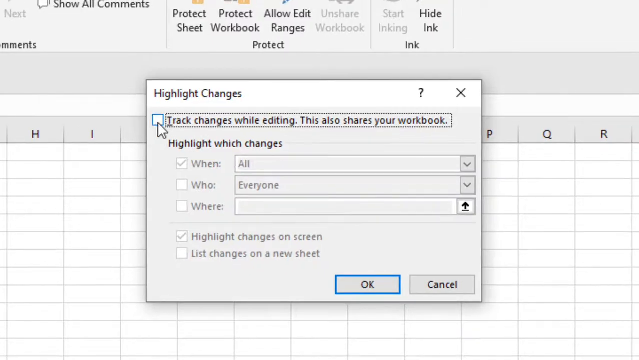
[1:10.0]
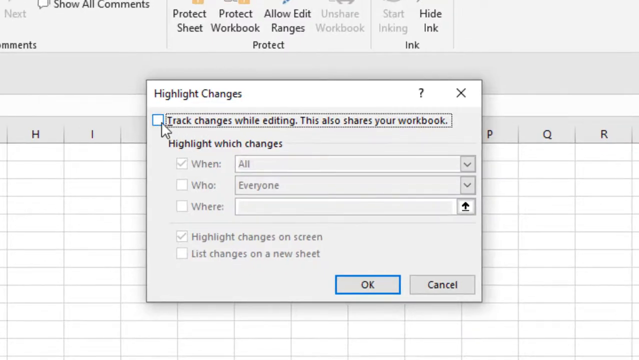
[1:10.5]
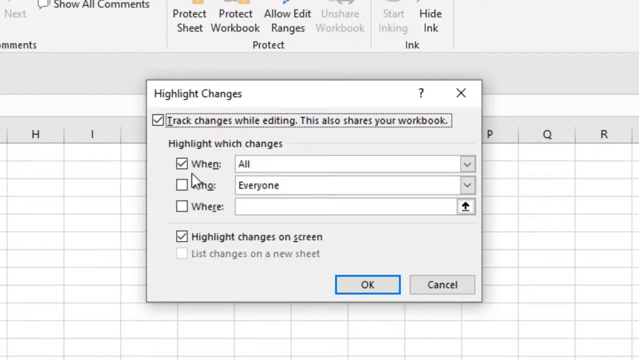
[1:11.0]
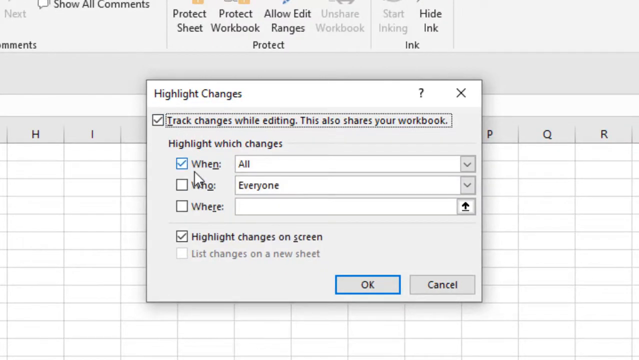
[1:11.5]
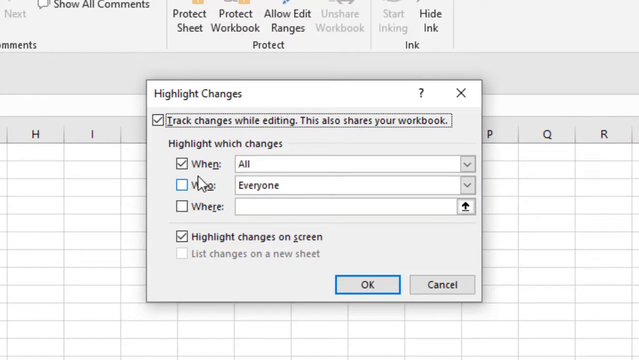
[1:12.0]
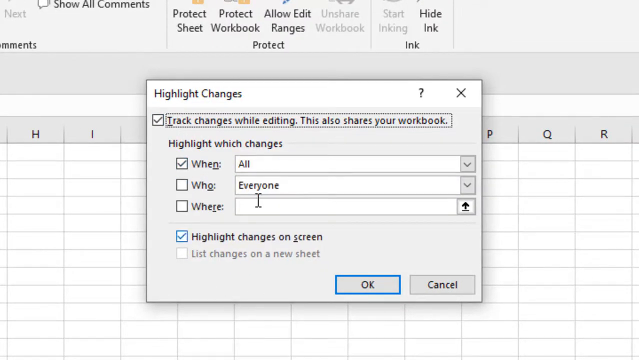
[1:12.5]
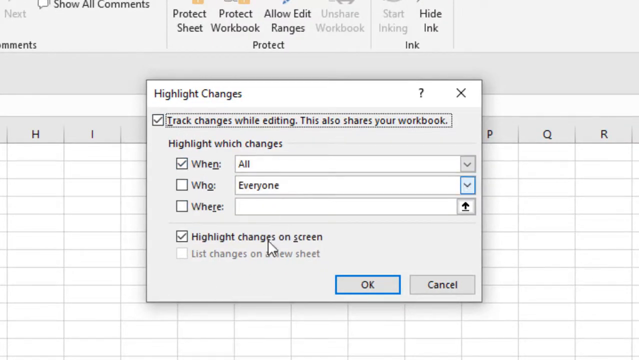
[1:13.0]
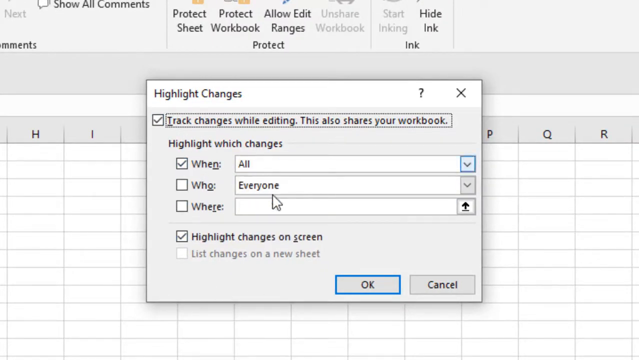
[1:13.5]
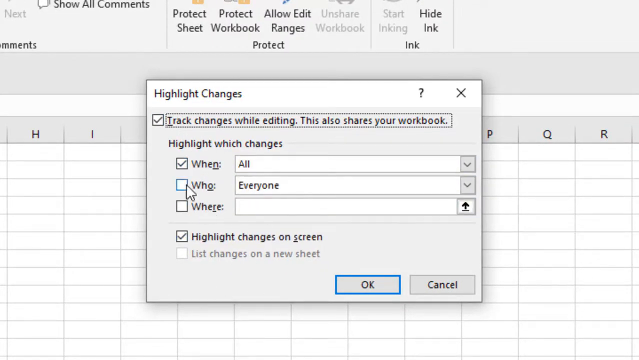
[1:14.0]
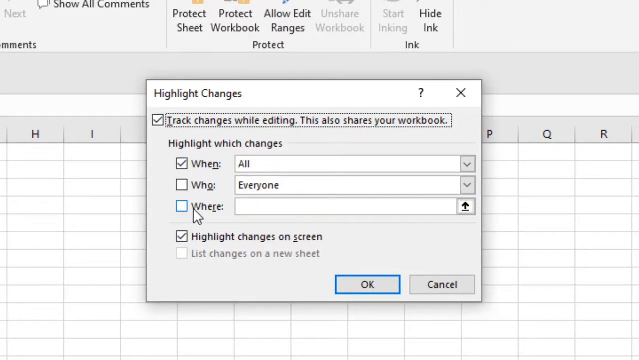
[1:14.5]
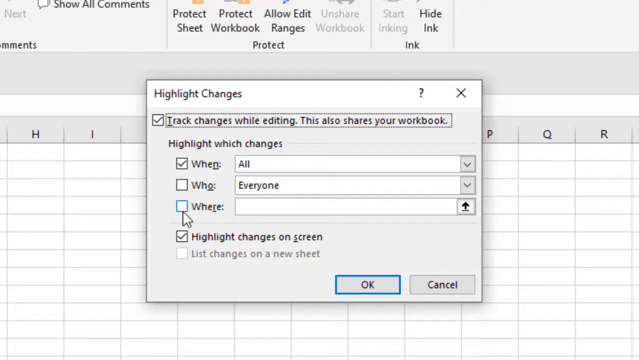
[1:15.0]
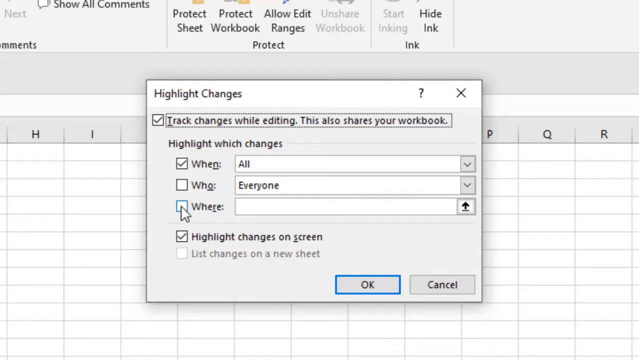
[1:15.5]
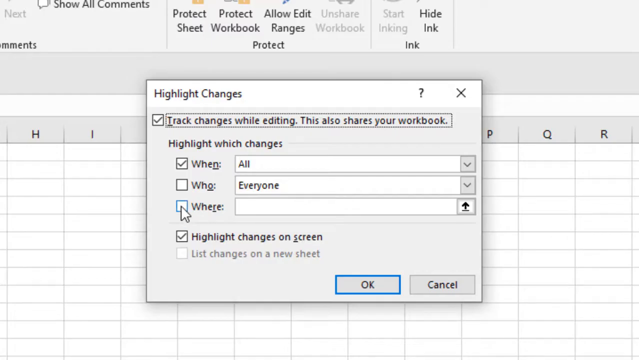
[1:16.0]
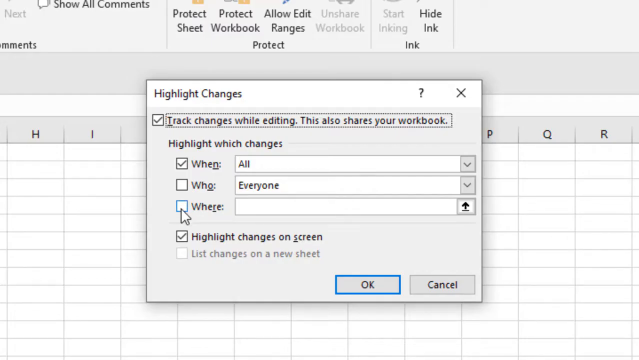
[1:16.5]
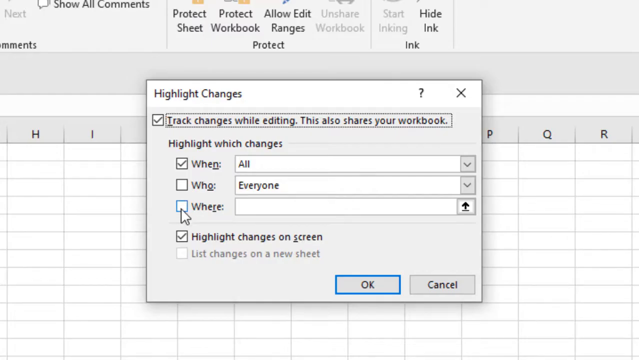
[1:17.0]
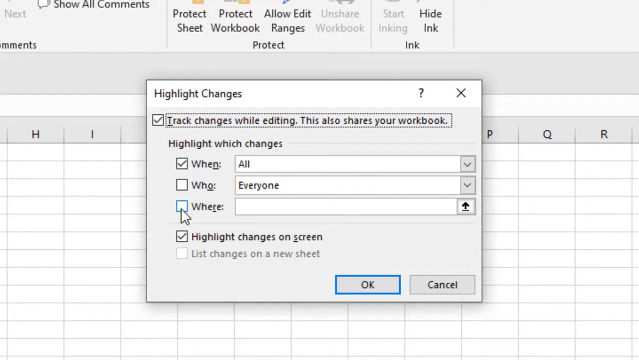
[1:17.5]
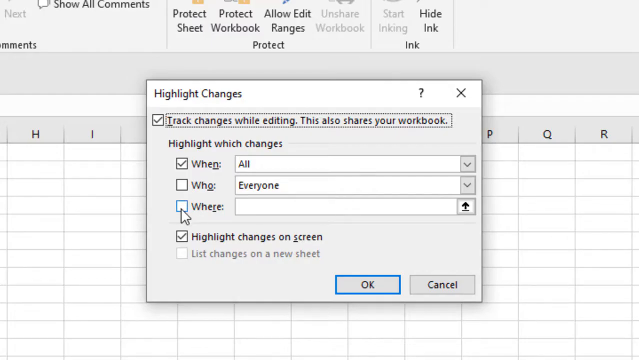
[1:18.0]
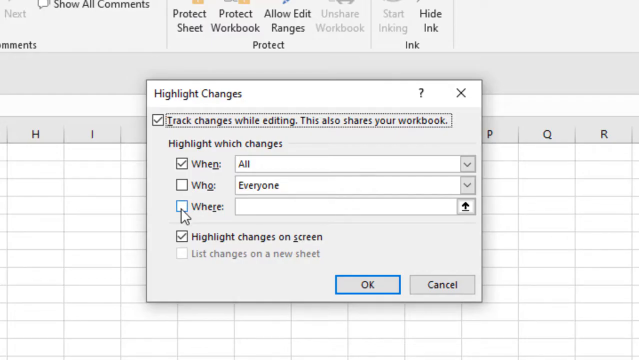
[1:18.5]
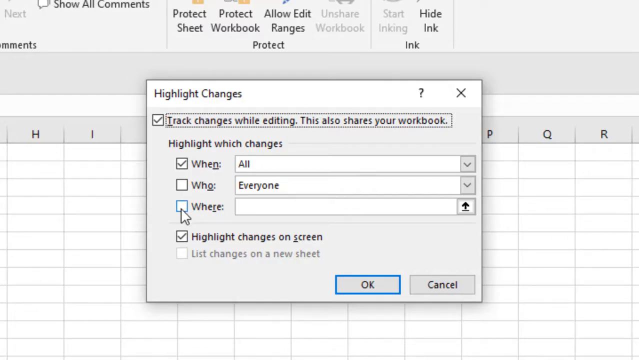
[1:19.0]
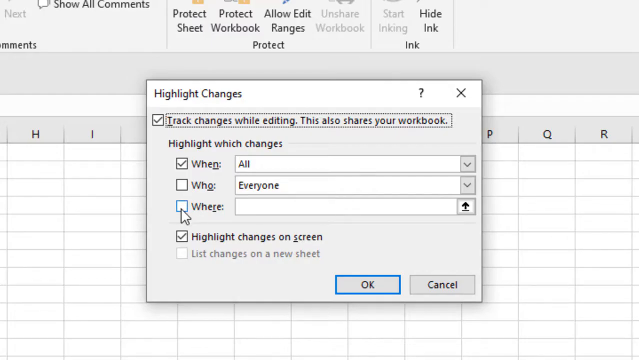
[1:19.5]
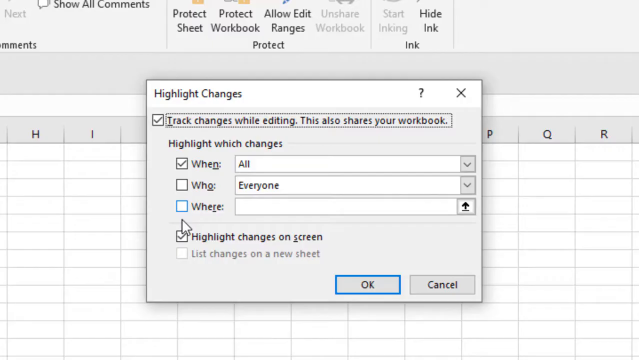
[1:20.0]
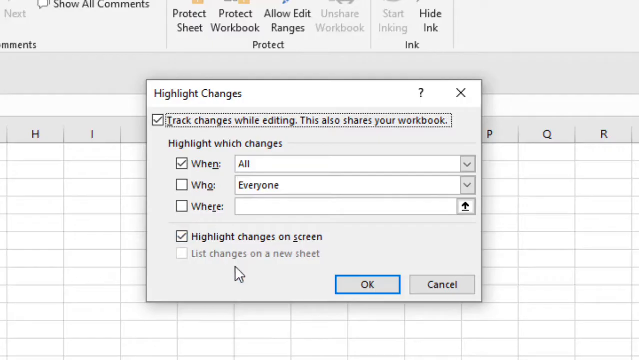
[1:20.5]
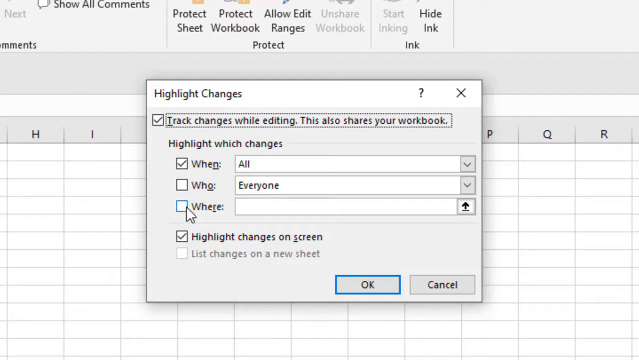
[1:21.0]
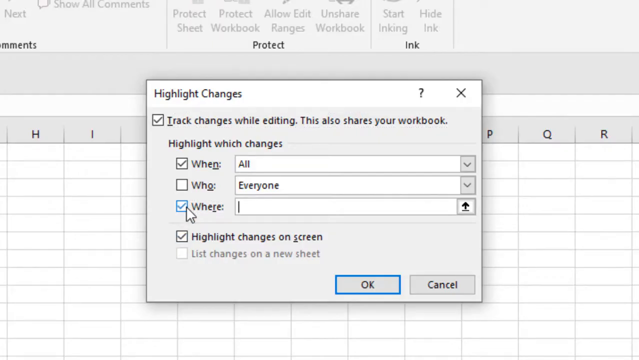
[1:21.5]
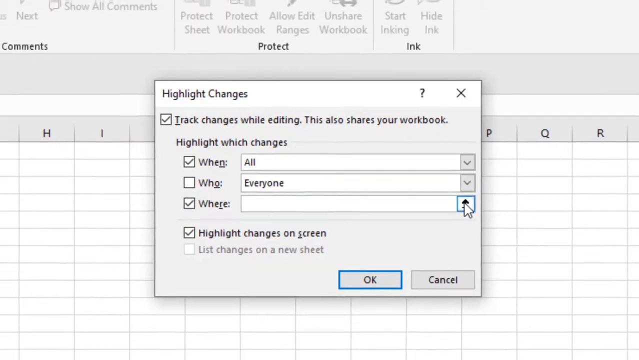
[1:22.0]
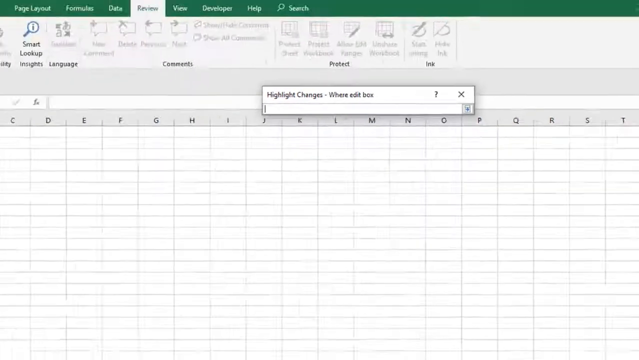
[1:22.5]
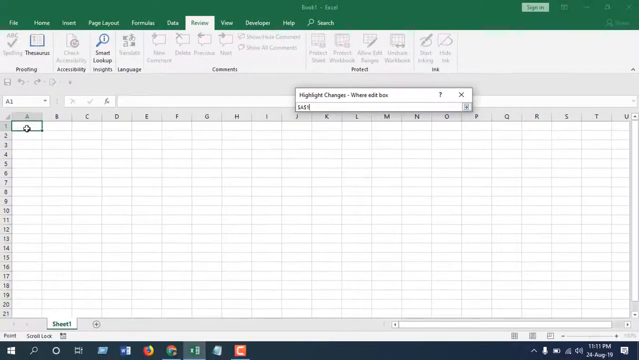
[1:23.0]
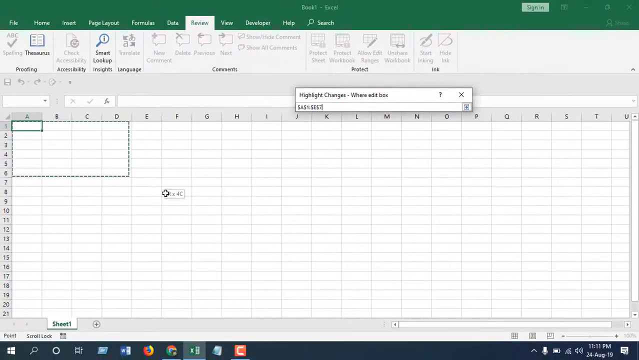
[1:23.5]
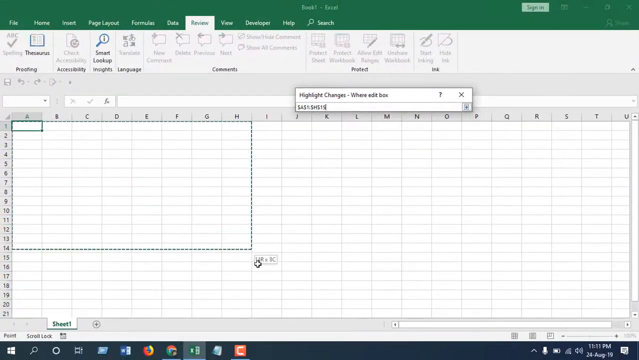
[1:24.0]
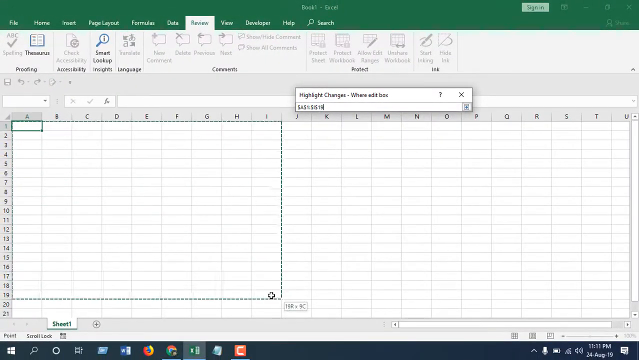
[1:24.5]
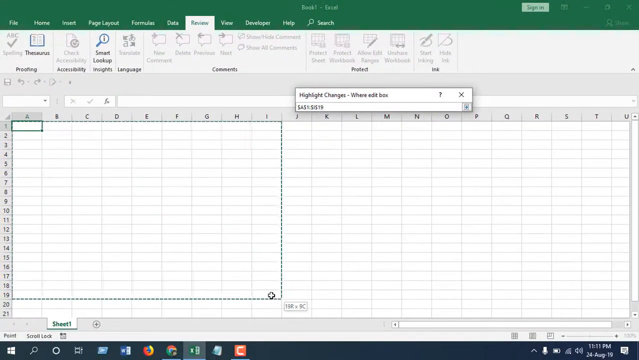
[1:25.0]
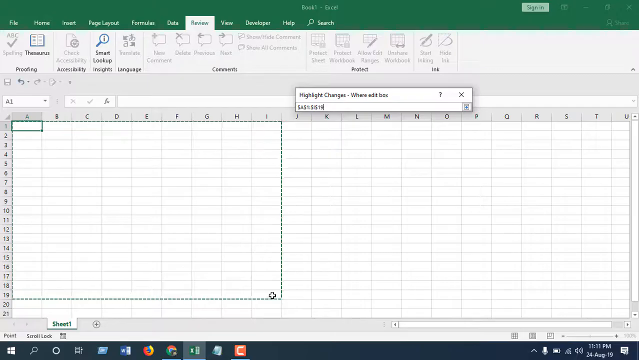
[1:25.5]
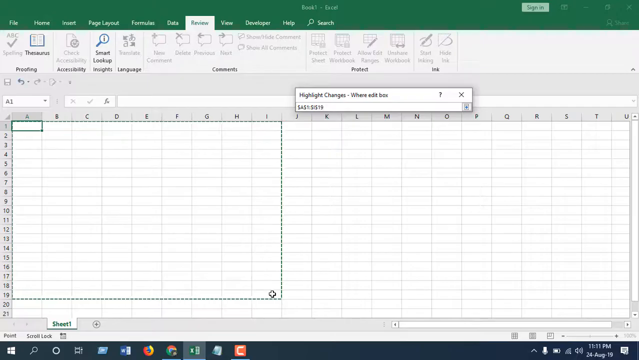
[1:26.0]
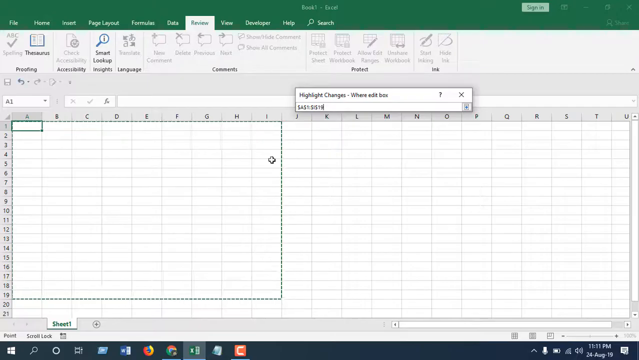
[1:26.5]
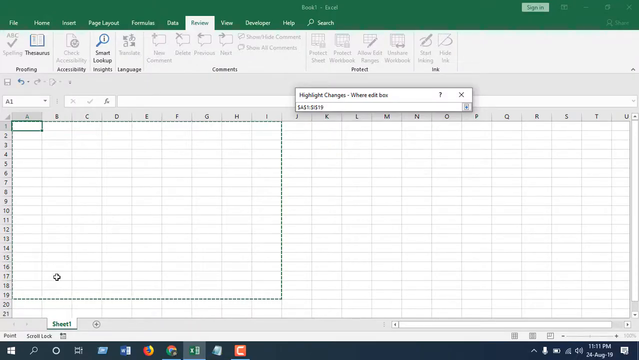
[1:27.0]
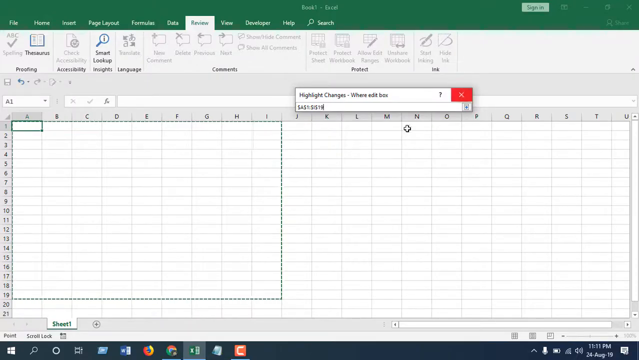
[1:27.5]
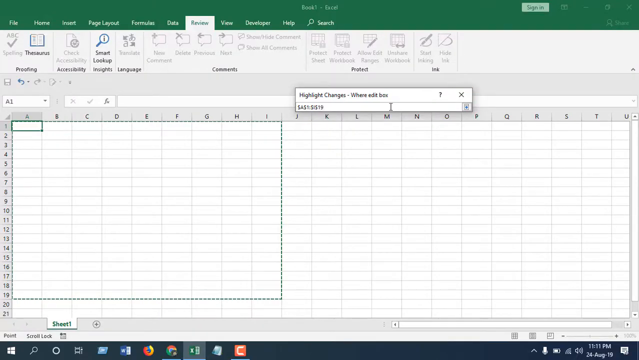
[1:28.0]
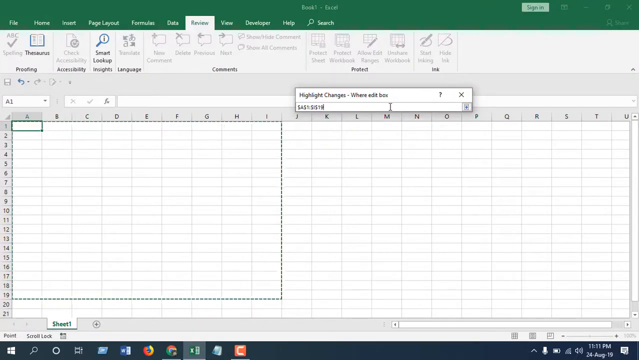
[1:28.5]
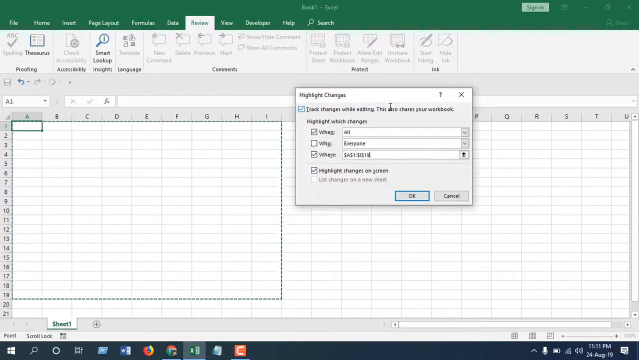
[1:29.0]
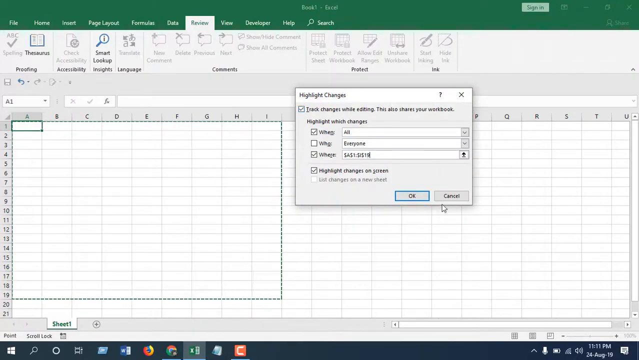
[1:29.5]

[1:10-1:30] A box titled "Highlight Changes" is open in Microsoft Excel. Its text reads "Track changes while editing. This also shares your workbook", "Highlight which changes" with When, Who and Where, and "Highlight changes on screen" and "List changes on a new sheet", with some of this dimmed out because those settings are not enabled. The user toggles the track changes while editing option, which makes the Highlight which changes settings adjustable. The mouse moves over that section and hovers over the Where box, and the user selects it. The user then clicks another box, where a set of numbers pops up, and drags the mouse over a box on the screen. The user then right-clicks, leading to the Where box with a formula inside it.